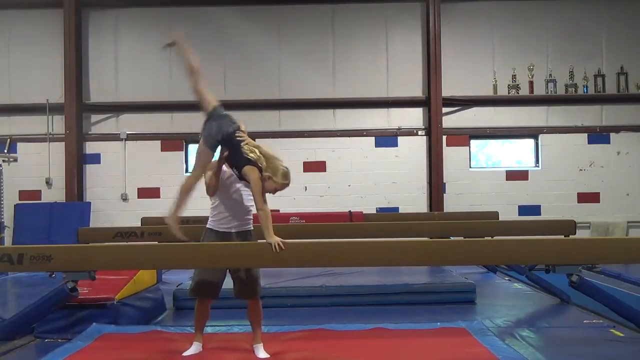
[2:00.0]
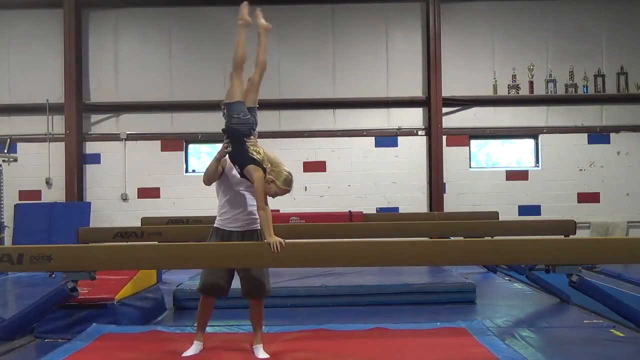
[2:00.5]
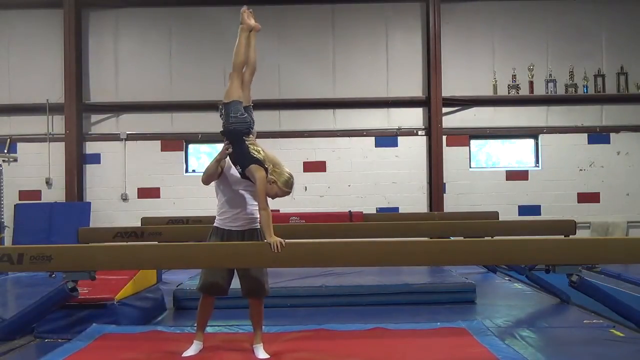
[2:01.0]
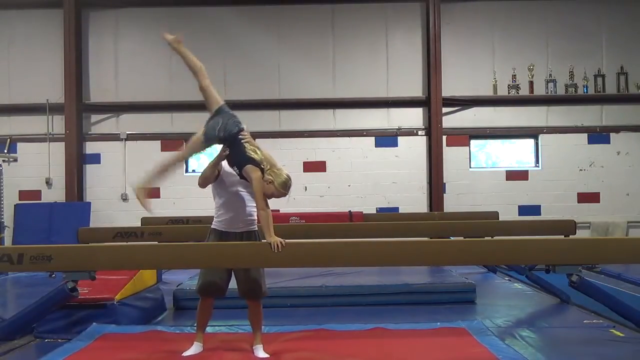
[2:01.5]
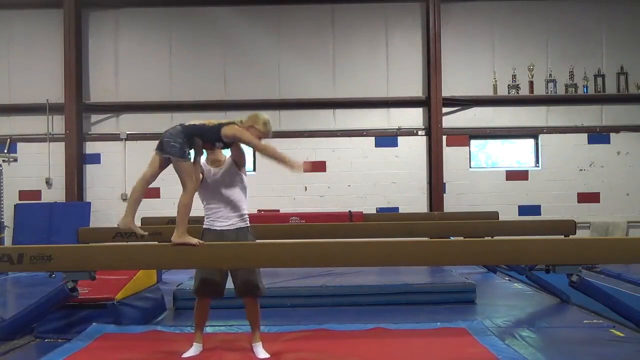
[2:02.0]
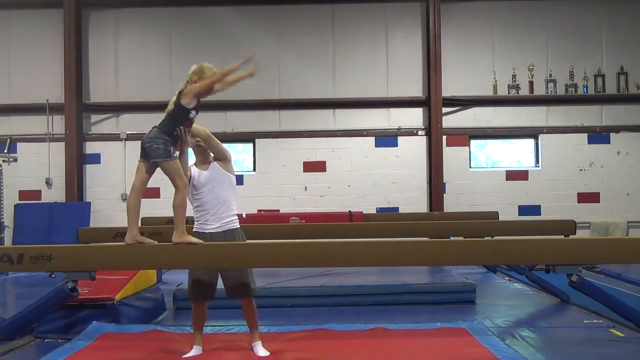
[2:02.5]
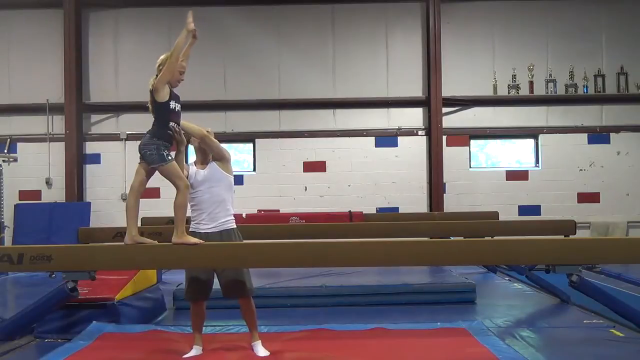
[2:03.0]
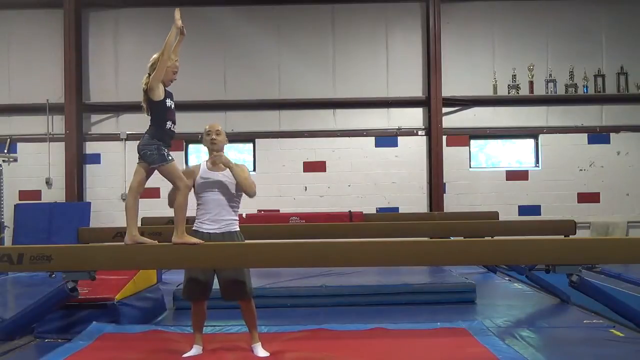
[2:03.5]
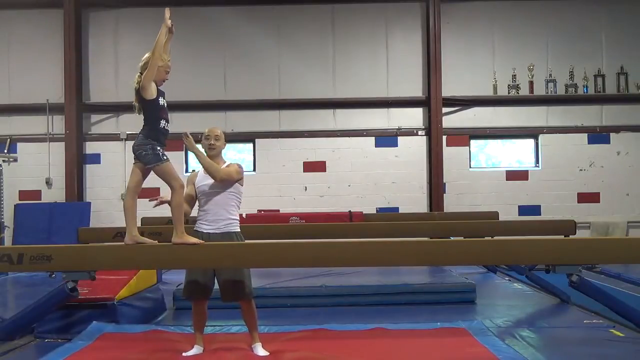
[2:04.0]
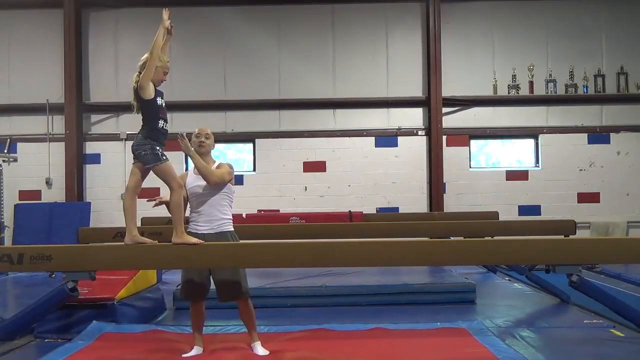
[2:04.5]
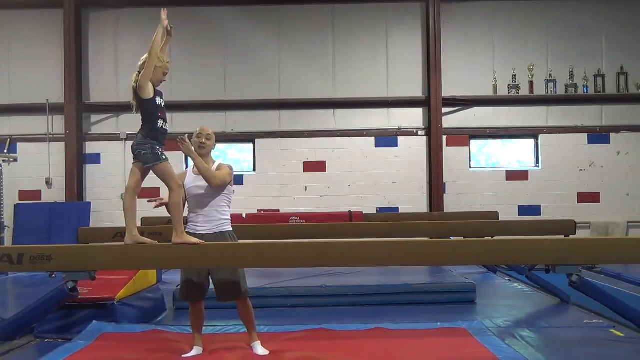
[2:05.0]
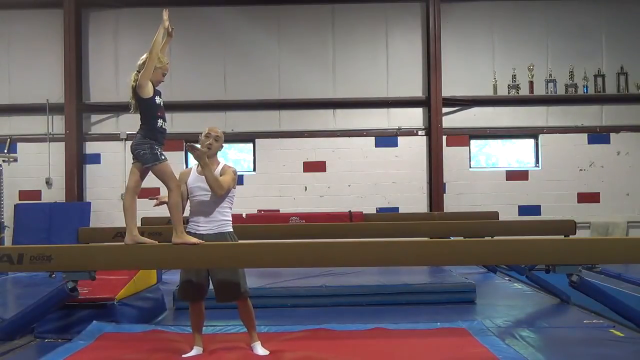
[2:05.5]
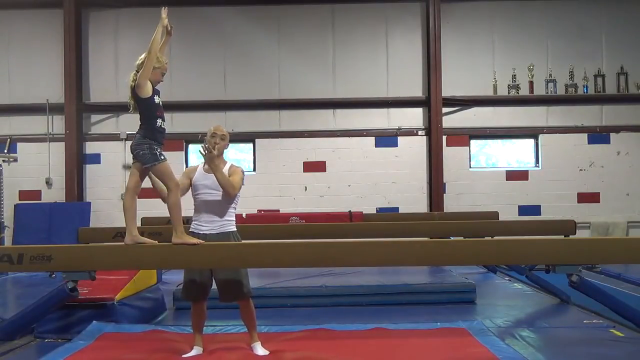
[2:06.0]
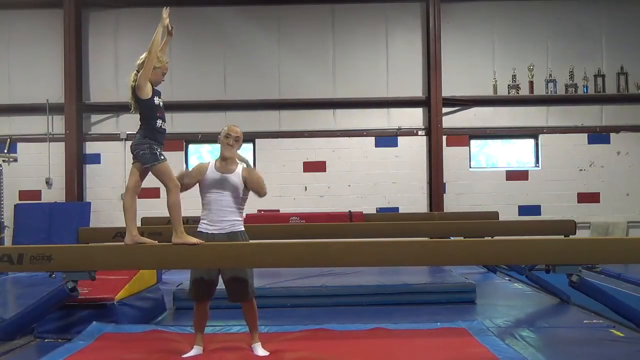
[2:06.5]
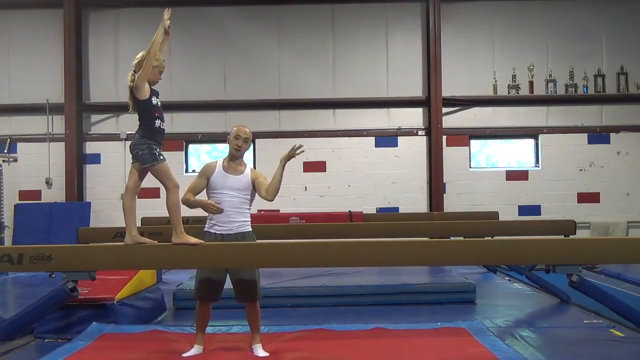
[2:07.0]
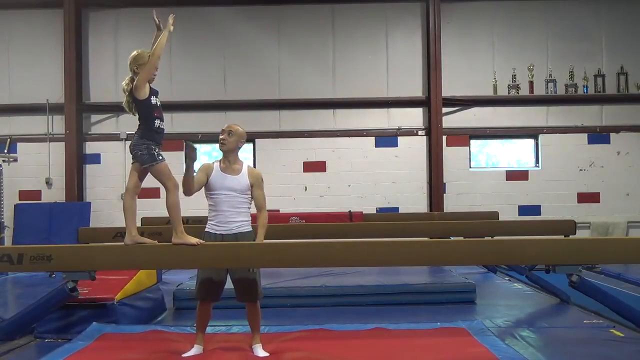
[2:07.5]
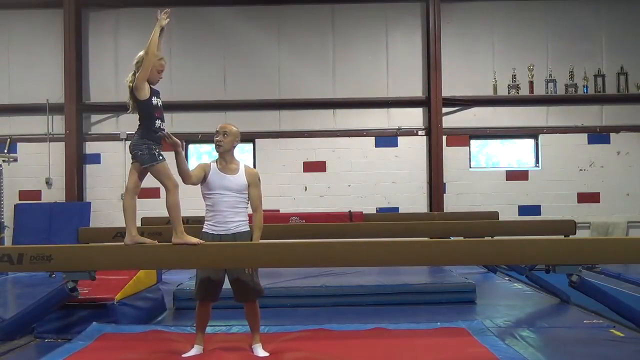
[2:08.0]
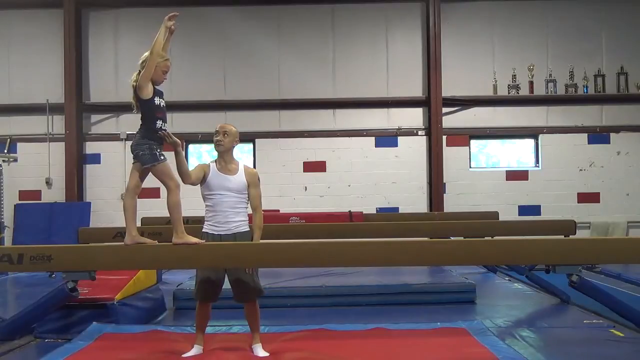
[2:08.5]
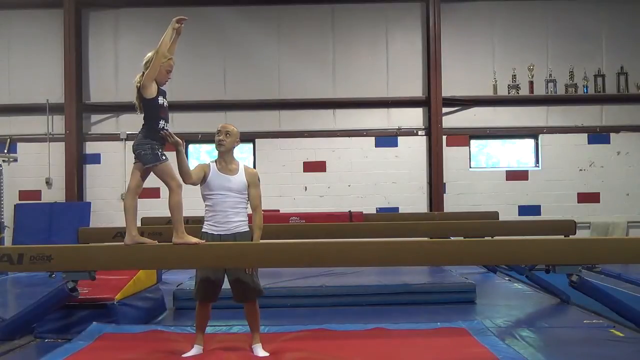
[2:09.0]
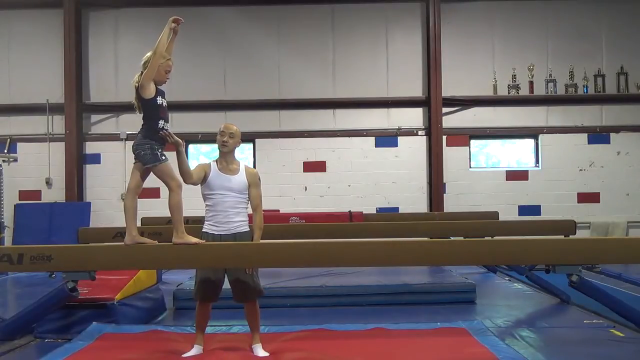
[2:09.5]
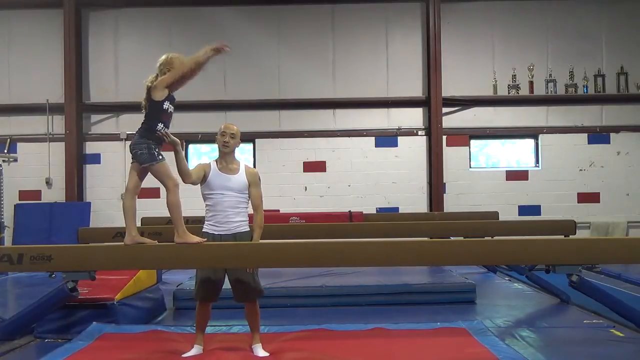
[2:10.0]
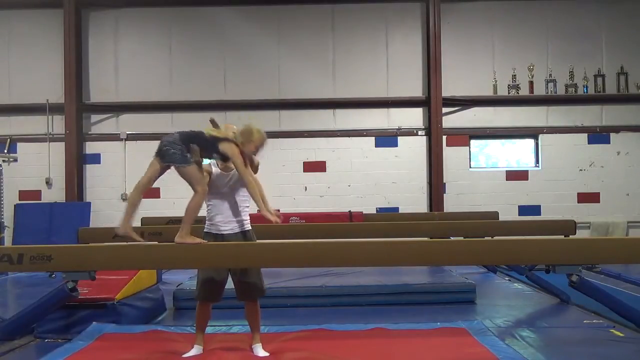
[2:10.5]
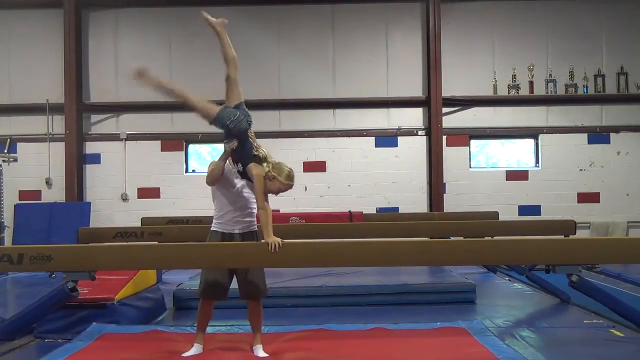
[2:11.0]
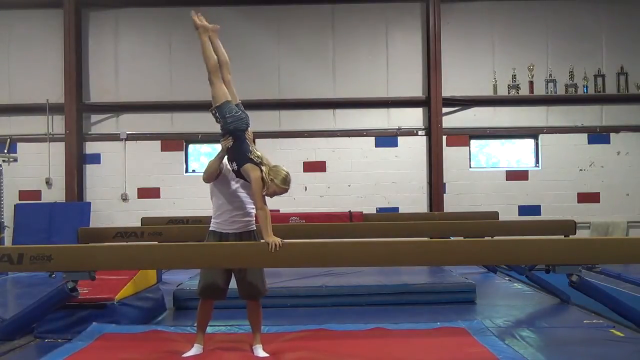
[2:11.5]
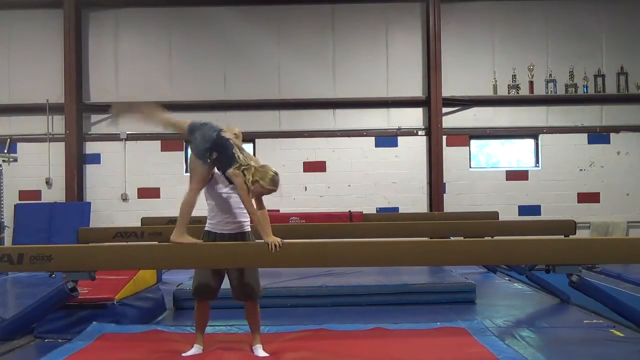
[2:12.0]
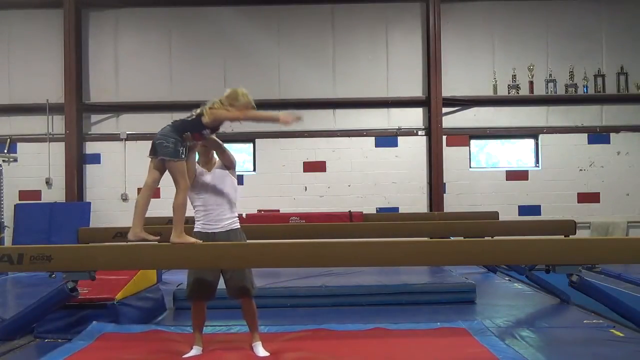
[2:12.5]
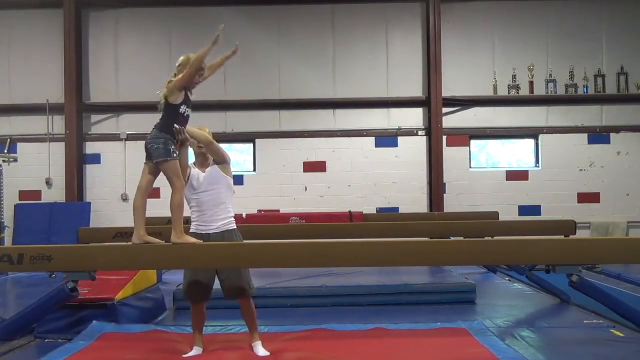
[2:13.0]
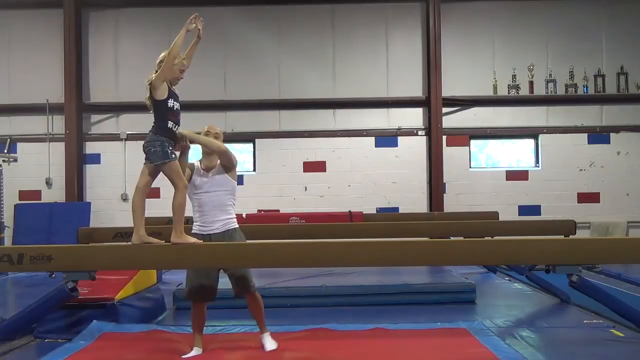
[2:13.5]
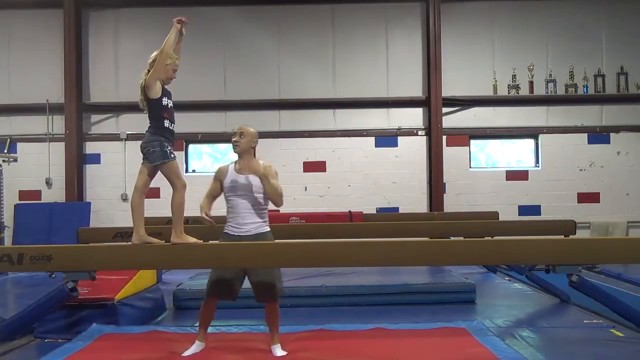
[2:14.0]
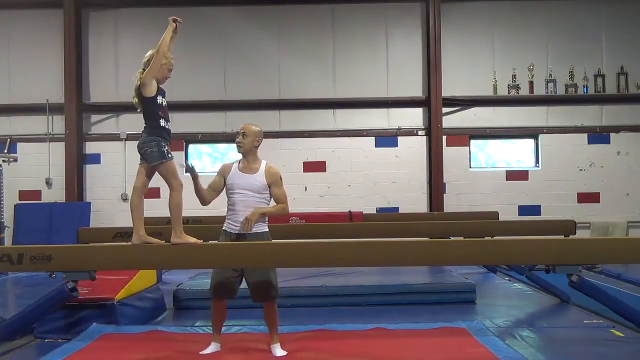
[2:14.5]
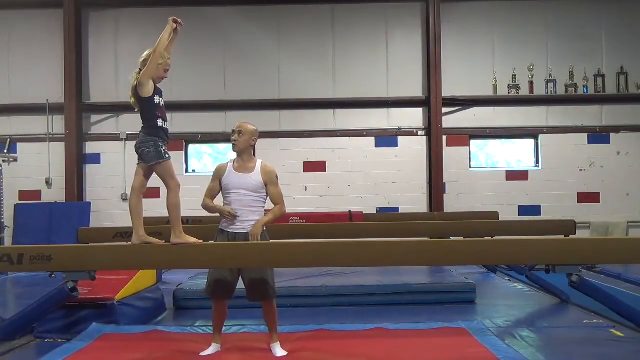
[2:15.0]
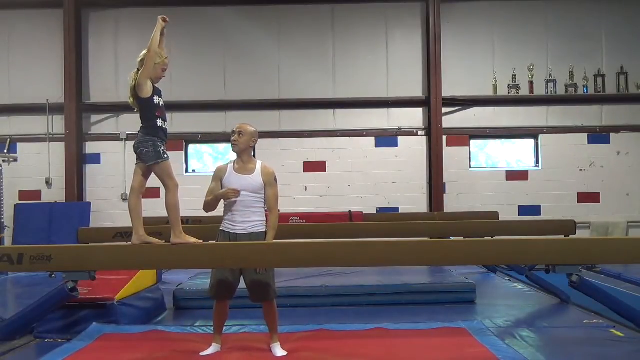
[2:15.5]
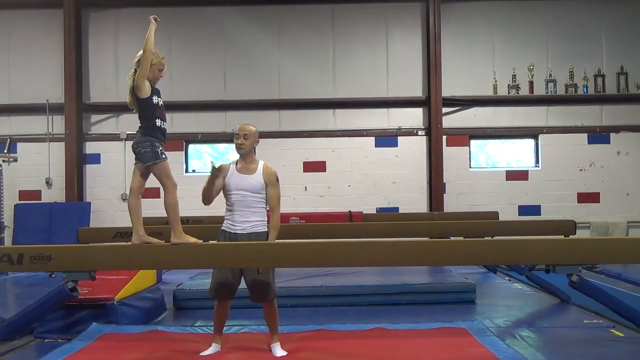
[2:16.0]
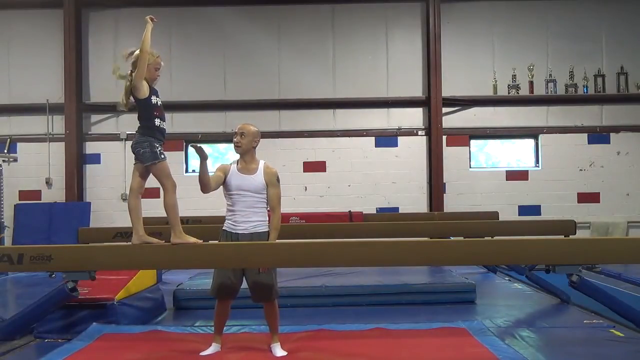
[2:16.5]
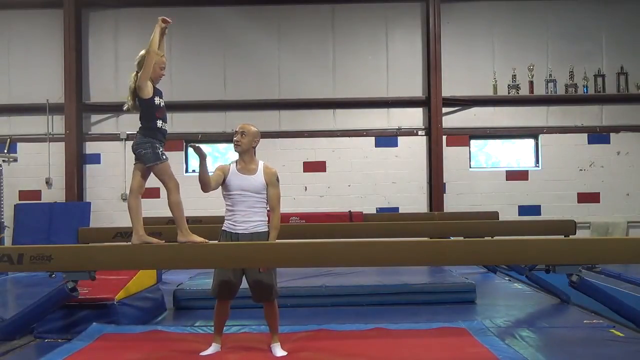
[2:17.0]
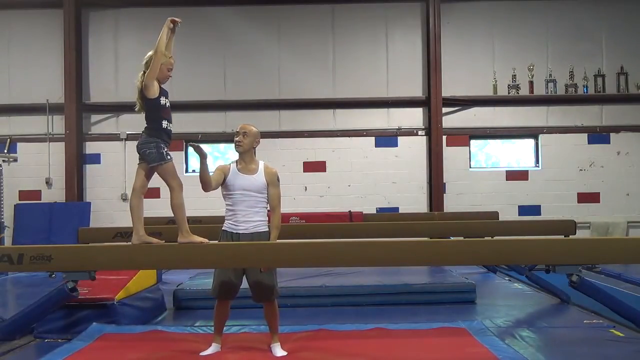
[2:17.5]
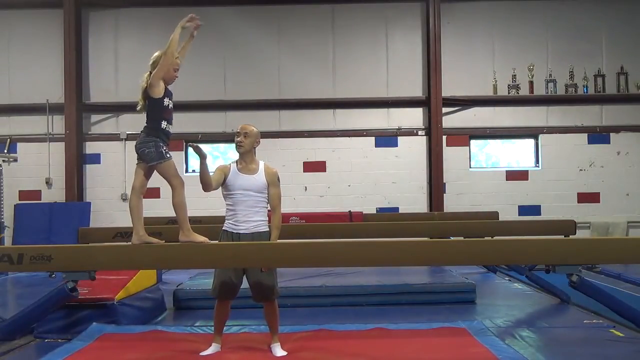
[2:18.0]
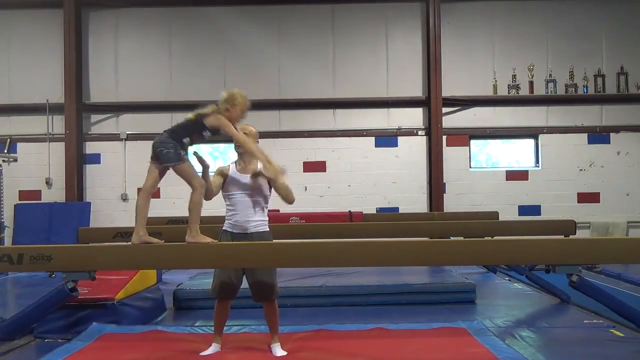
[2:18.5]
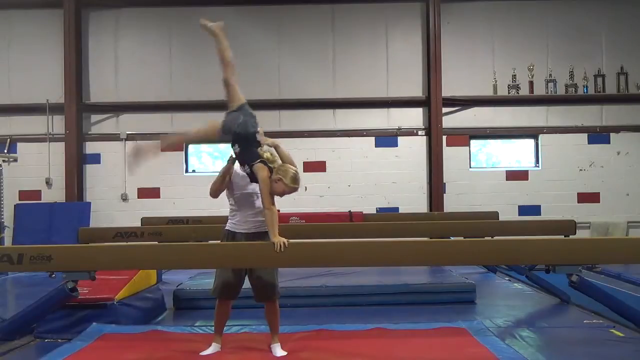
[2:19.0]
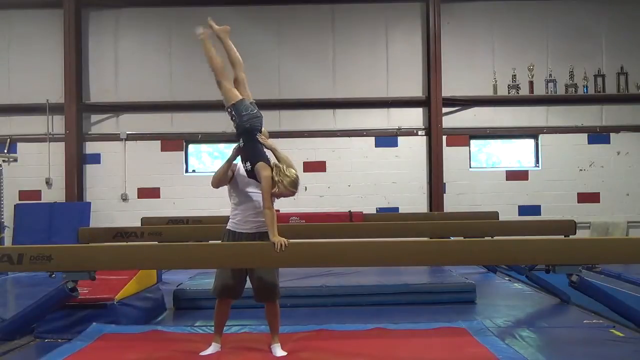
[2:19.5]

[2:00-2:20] A man in a white tank top in the background helps a little girl do flips on a wooden balance beam, and she rotates on the beam as she flips, concentrating. In the top right section of the frame, trophies of various sizes are lined up against the wall. In the background, alternating red and blue marks are on the wall, along with window frames.